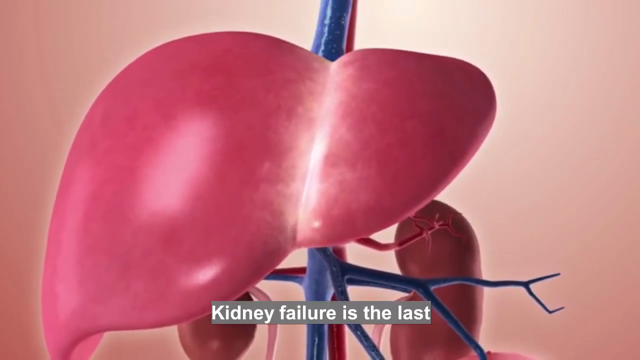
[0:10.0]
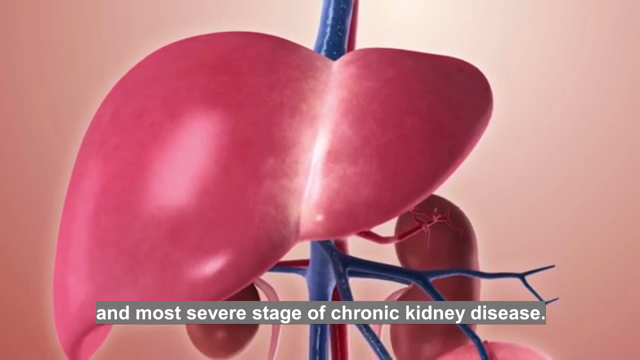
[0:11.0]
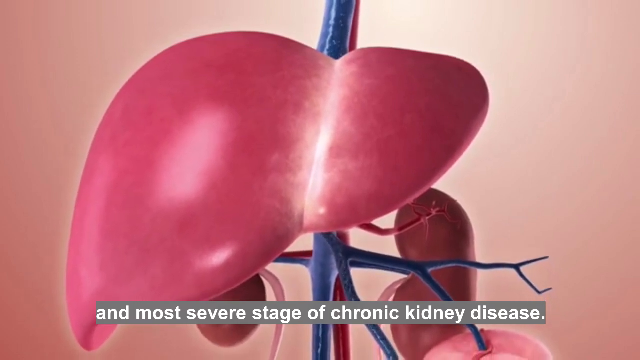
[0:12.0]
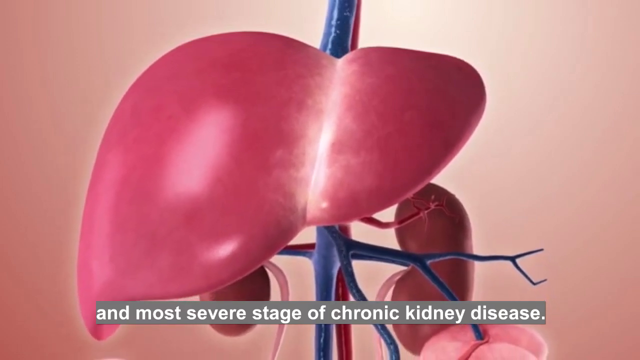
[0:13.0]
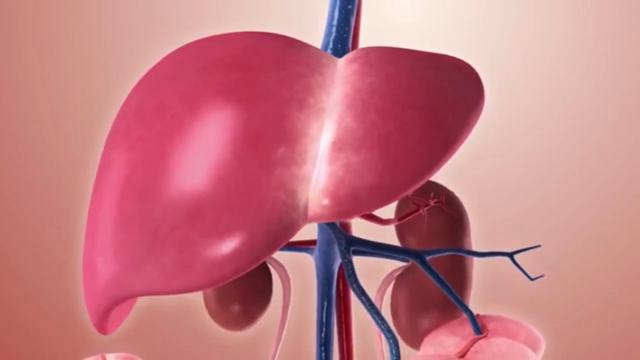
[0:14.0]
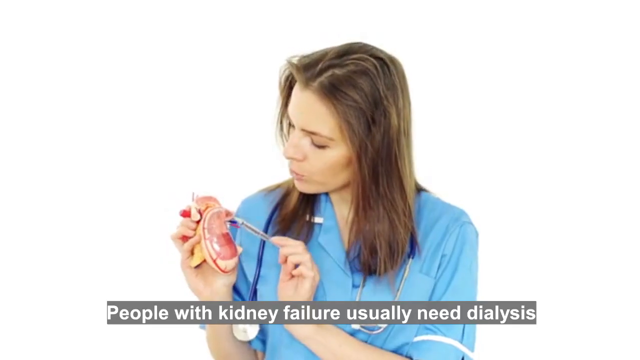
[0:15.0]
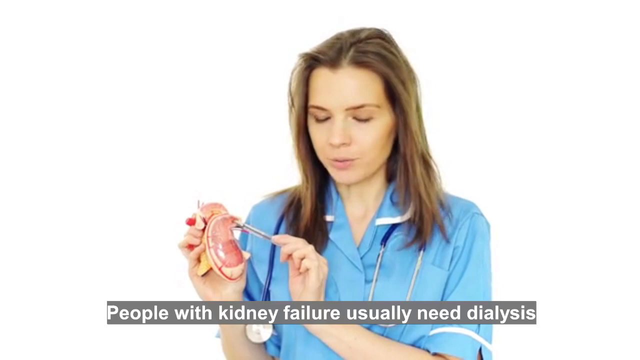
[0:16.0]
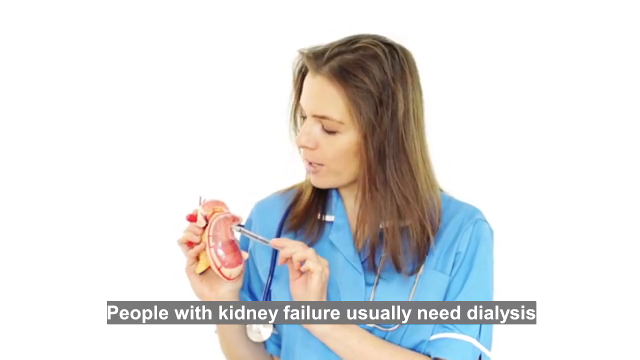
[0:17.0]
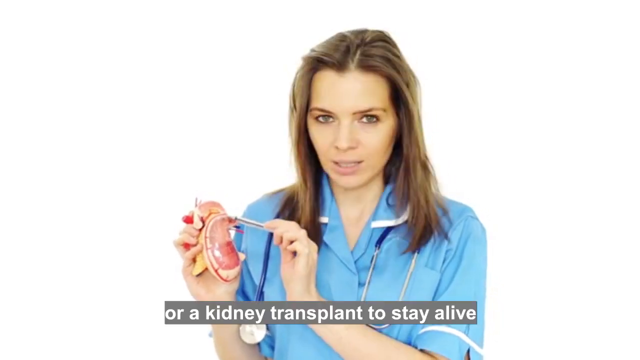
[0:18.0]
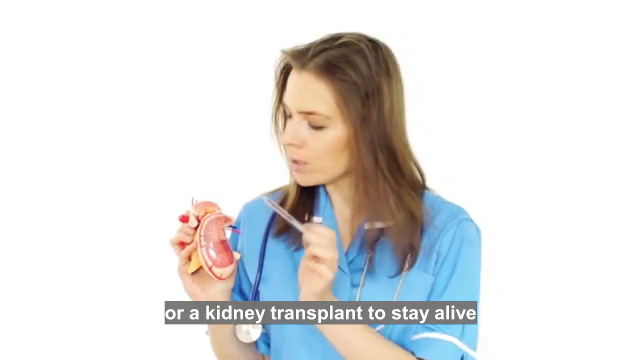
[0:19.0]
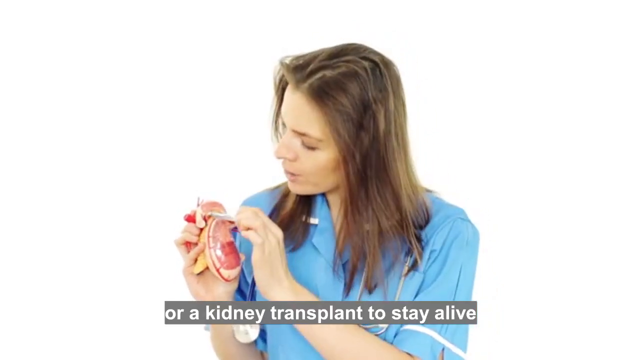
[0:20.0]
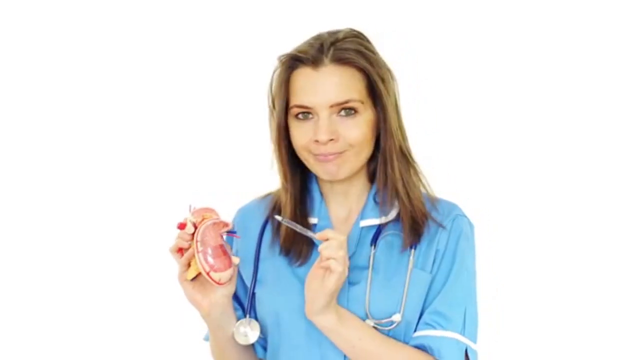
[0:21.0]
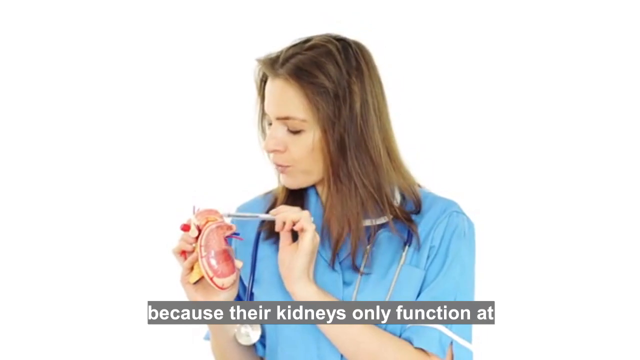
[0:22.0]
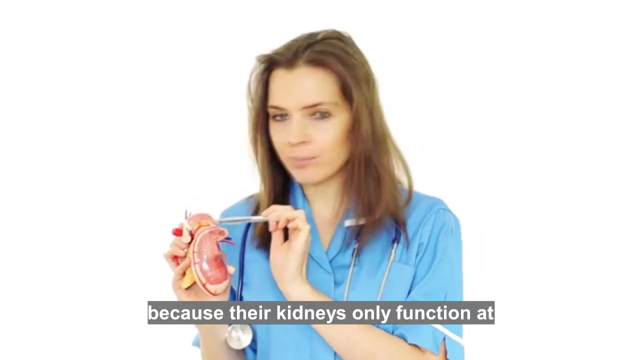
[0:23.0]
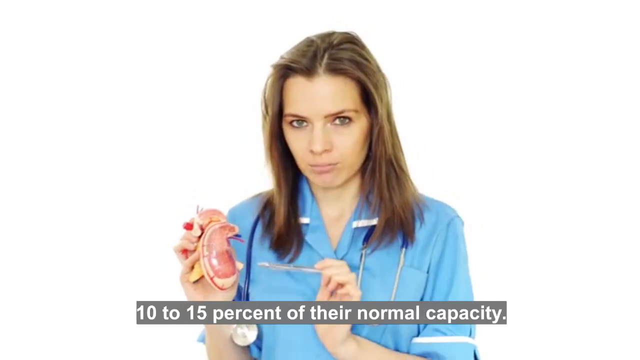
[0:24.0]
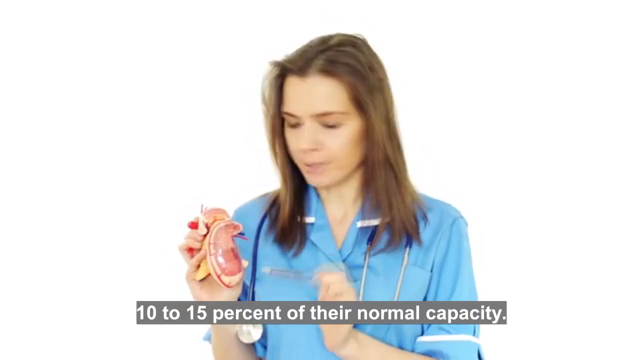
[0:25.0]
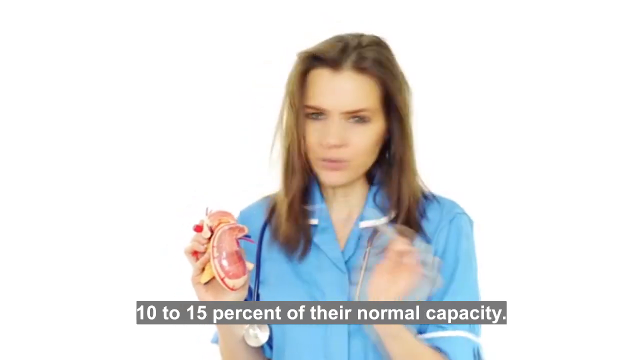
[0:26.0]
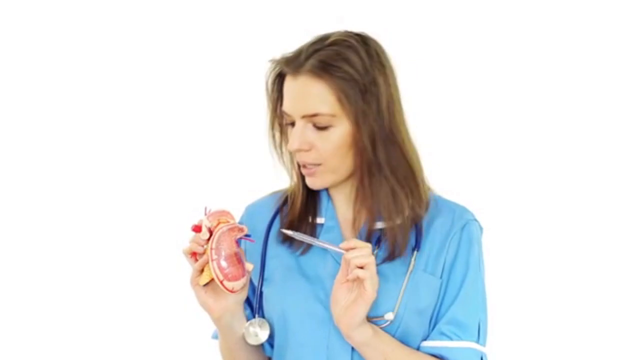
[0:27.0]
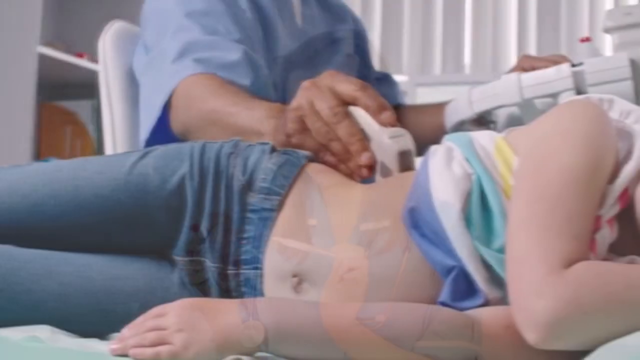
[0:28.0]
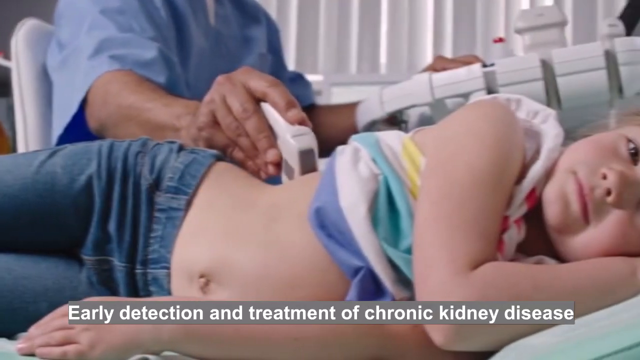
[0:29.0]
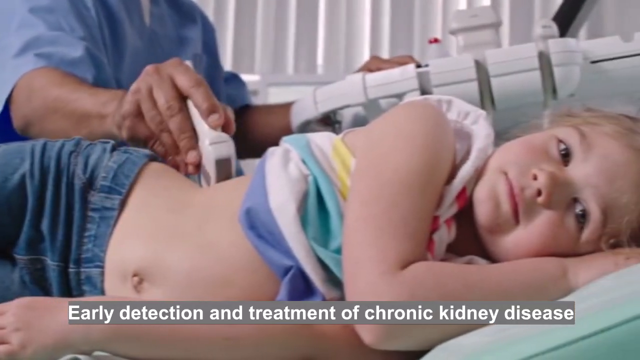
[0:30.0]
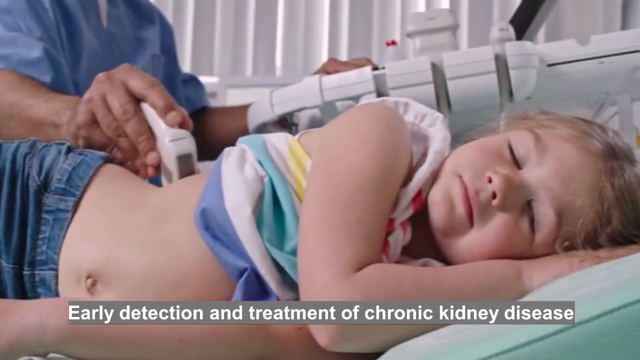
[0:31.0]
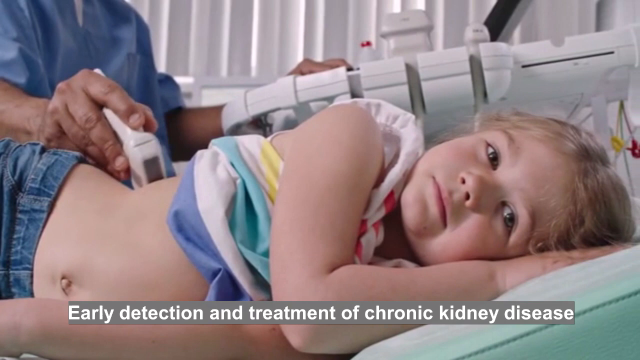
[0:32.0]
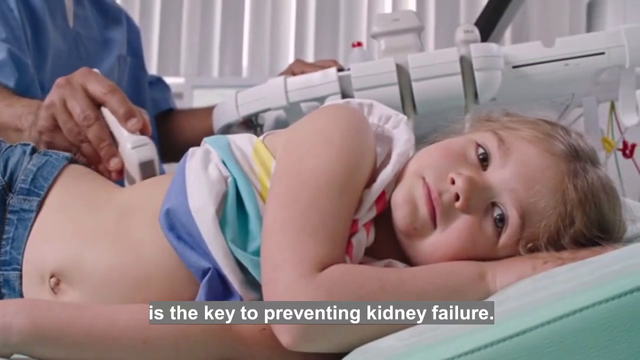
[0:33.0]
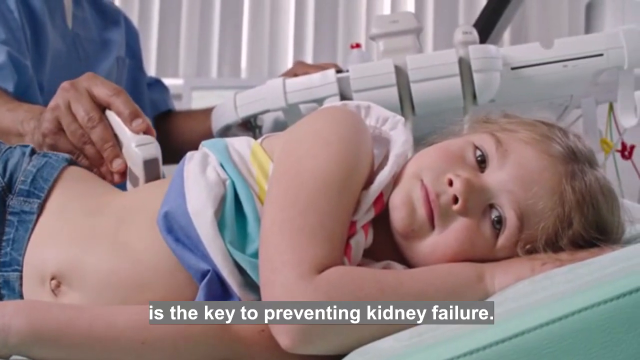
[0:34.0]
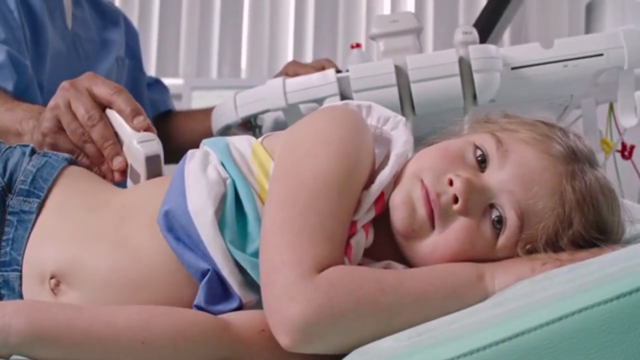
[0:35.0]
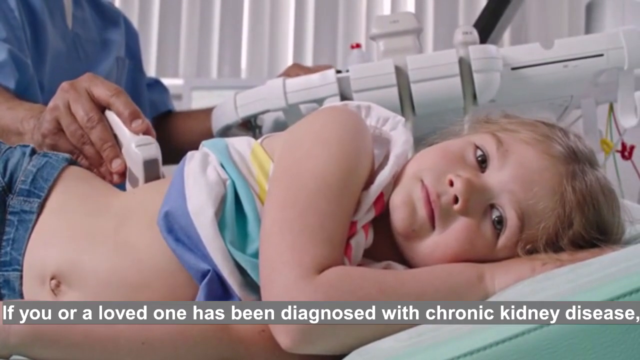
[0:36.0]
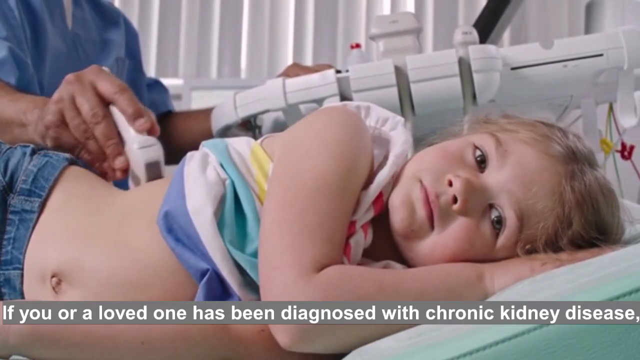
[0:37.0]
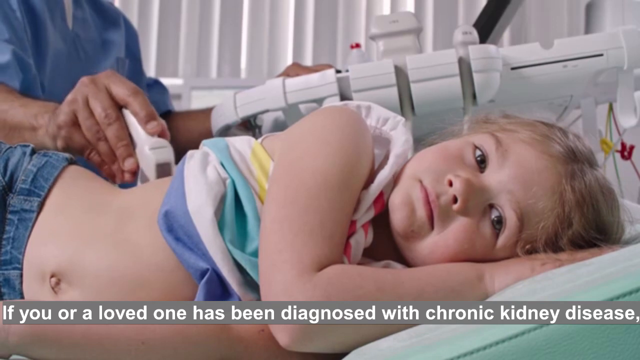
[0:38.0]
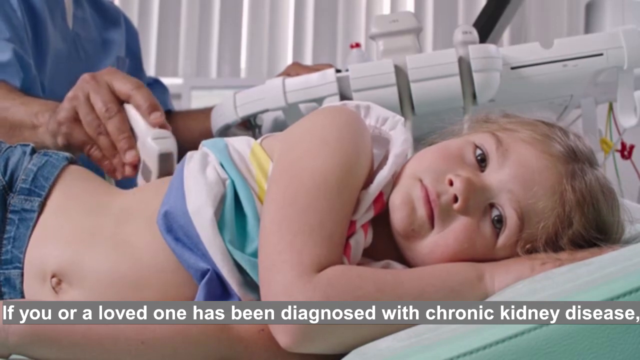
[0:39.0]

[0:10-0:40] A CGI image shows the kidneys and what would be the liver on a gray background, with white text at the bottom reading "kidney failure is the last and most severe stage of chronic kidney disease." The video cuts to a white woman in blue scrubs on a white background. On the left she holds something that is apparently meant to be a more realistic kidney, and in her hand on the right she appears to have a pen or some type of pointer, pointing at it. Text reads "people with kidney failure usually need dialysis or a kidney transplant to stay alive because their kidneys only function at 10 to 15% of their normal capacity." The video then cuts to a child lying on their side in blue jeans, head toward the upper right of the frame, while someone behind them does something like a sonogram. Text reads "early detection and treatment of chronic kidney disease is the key to preventing kidney failure." The child keeps lying there as text reads "if you or a loved one has been diagnosed with chronic kidney disease".